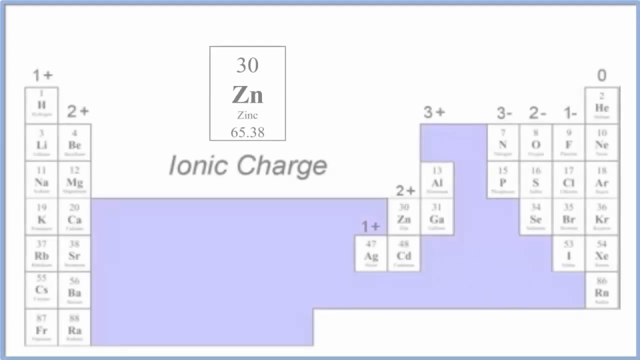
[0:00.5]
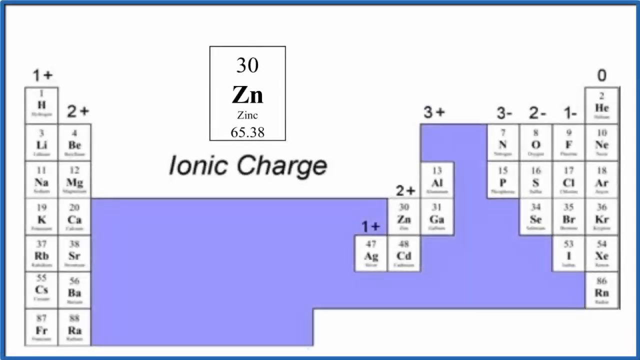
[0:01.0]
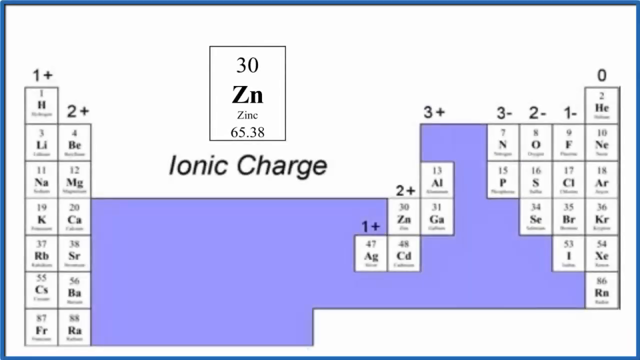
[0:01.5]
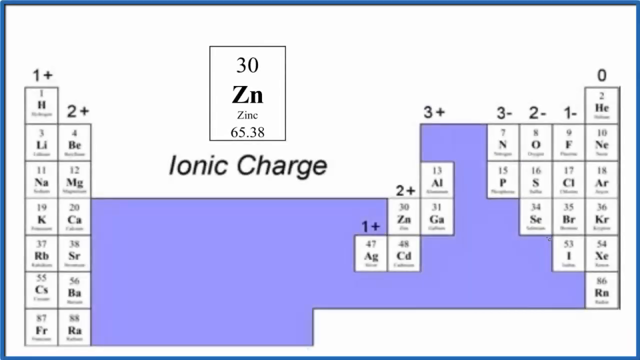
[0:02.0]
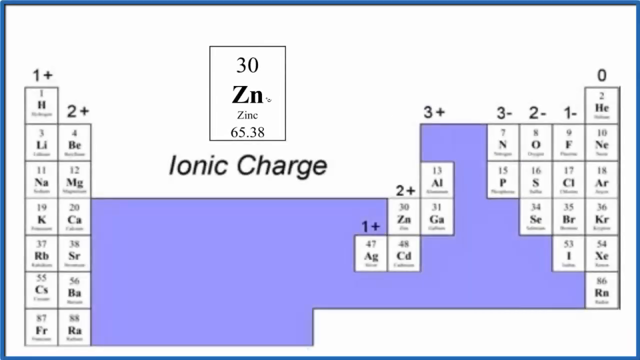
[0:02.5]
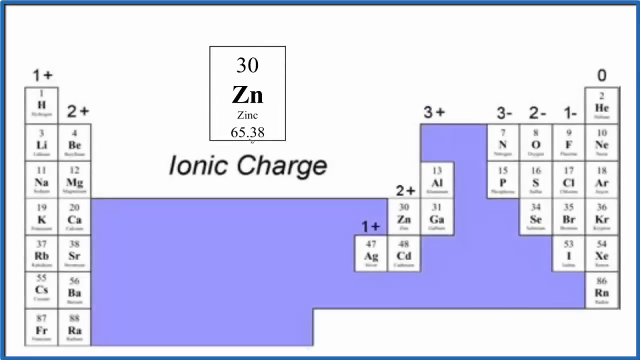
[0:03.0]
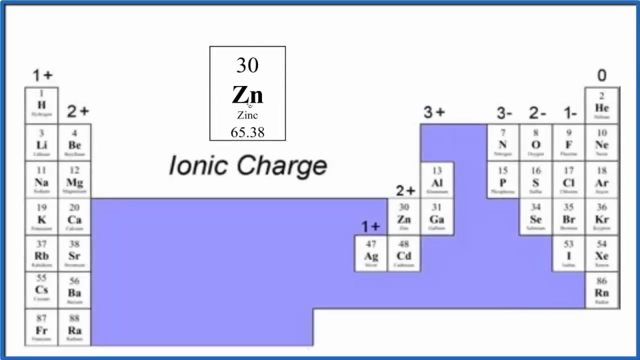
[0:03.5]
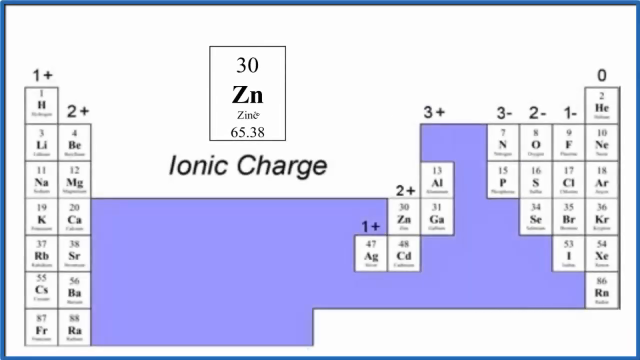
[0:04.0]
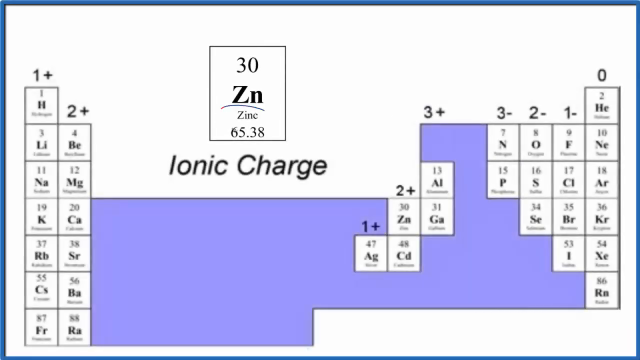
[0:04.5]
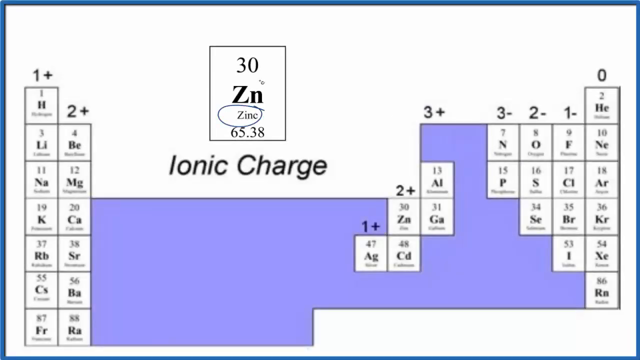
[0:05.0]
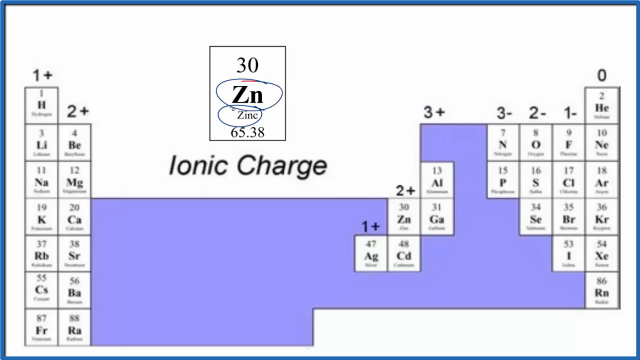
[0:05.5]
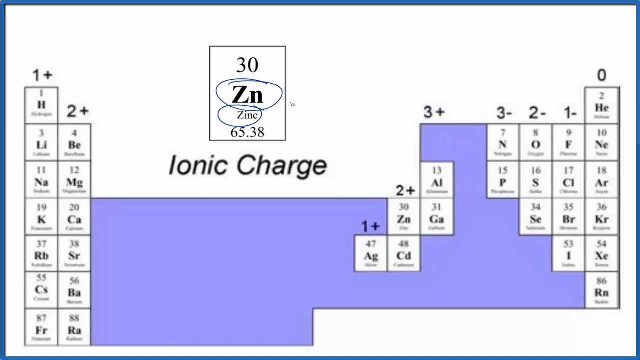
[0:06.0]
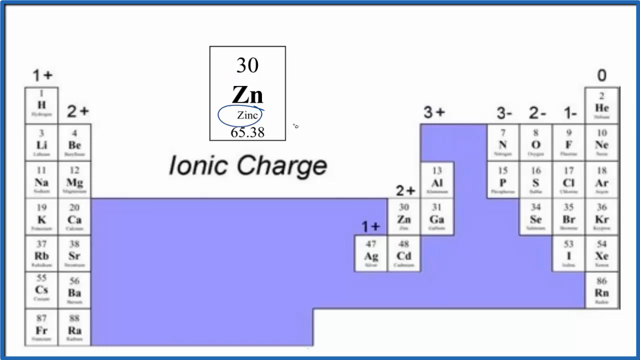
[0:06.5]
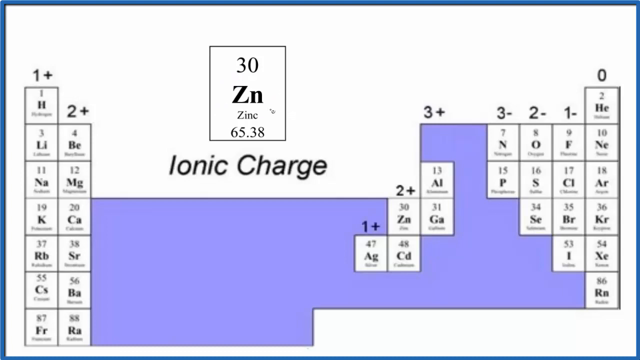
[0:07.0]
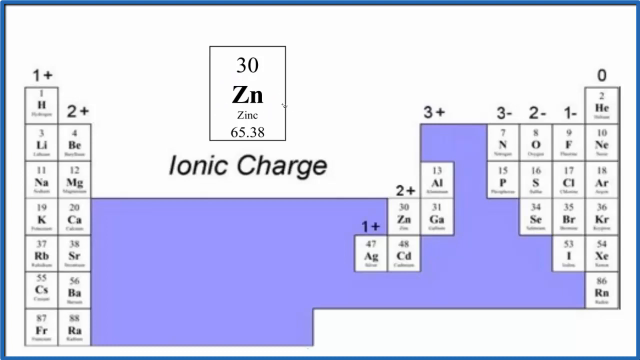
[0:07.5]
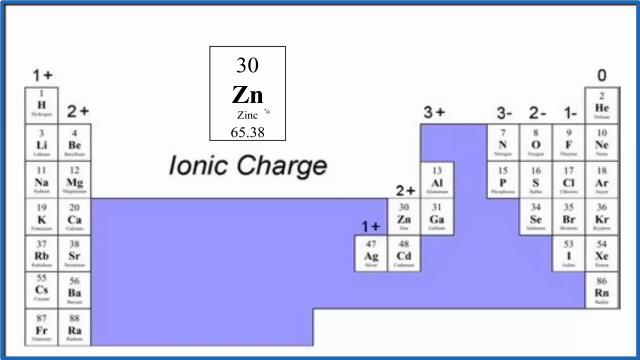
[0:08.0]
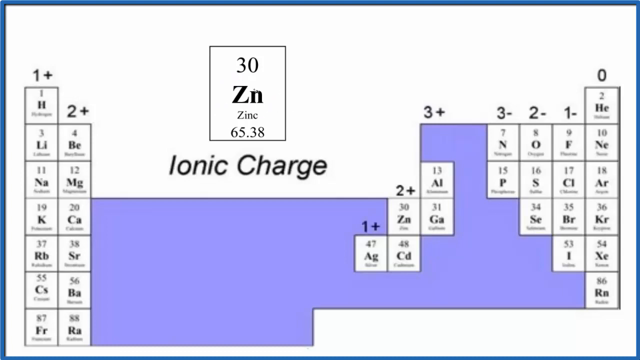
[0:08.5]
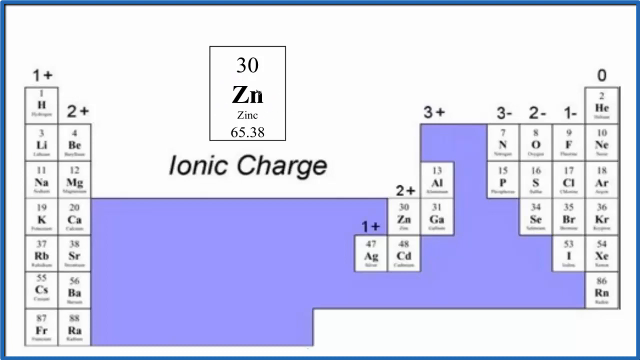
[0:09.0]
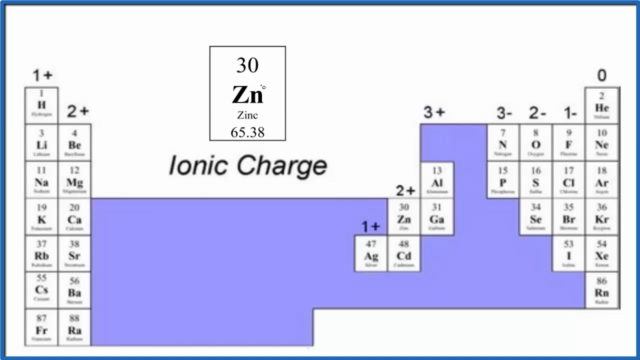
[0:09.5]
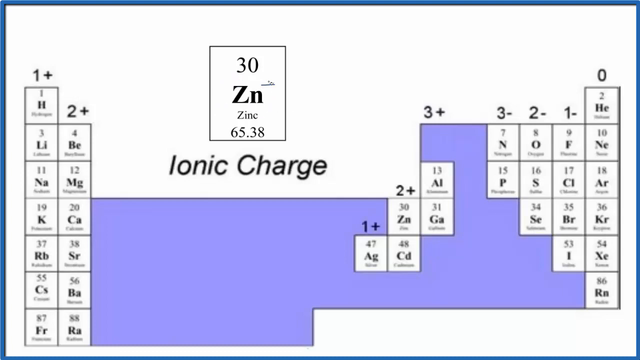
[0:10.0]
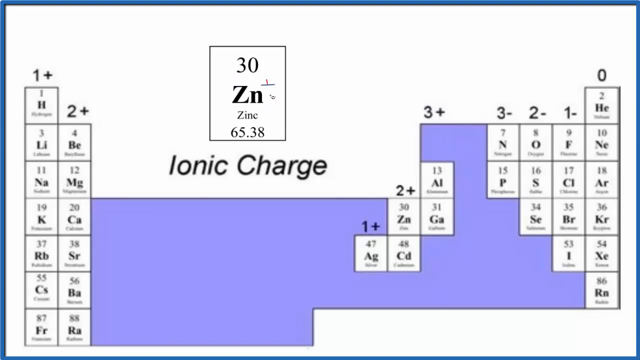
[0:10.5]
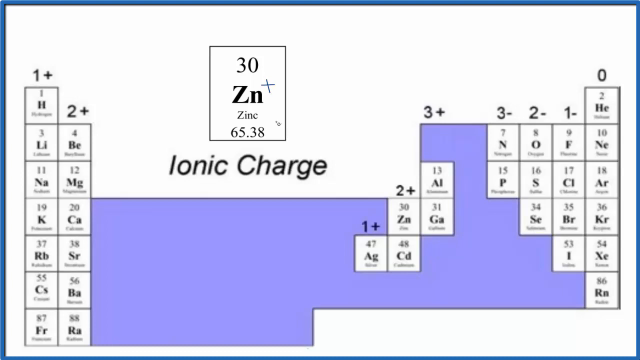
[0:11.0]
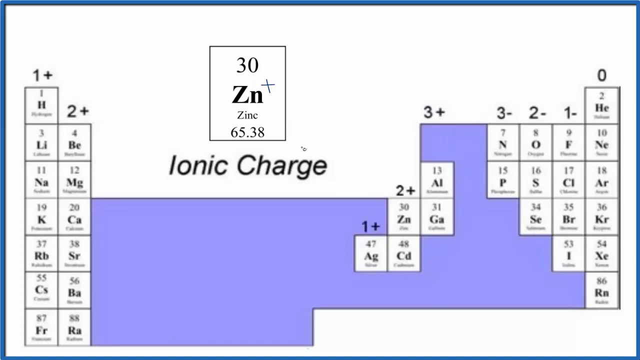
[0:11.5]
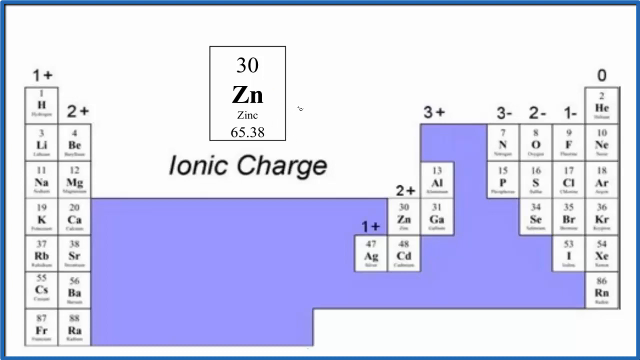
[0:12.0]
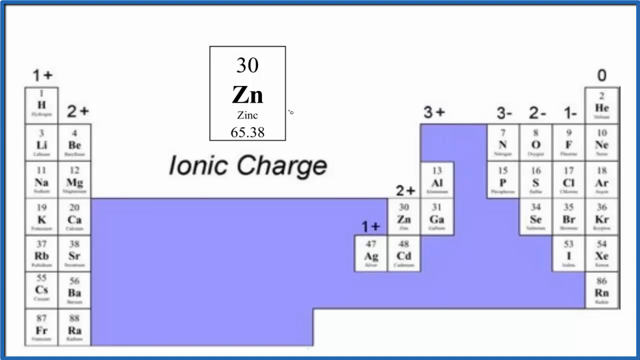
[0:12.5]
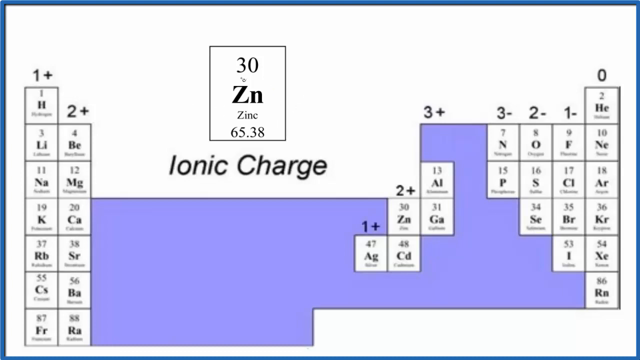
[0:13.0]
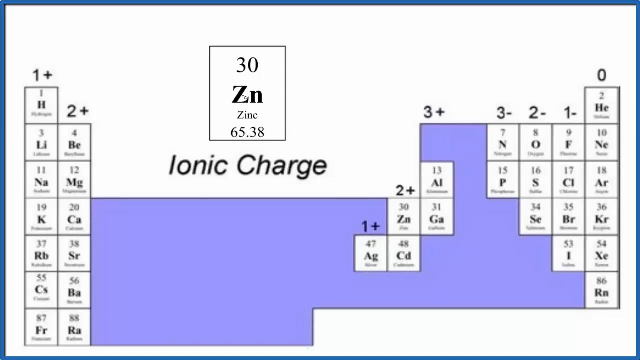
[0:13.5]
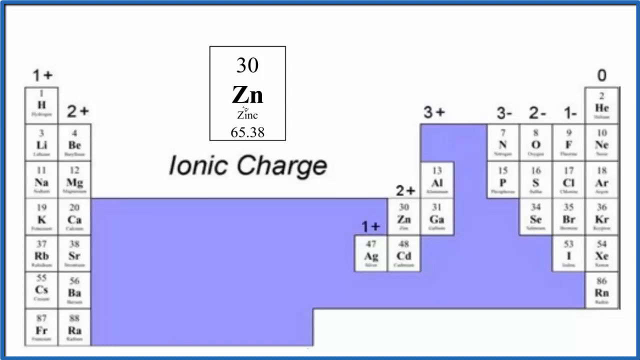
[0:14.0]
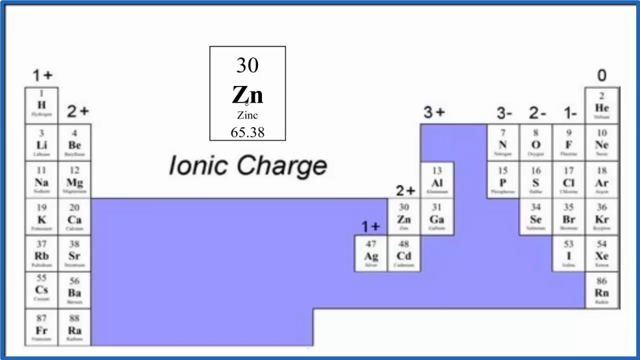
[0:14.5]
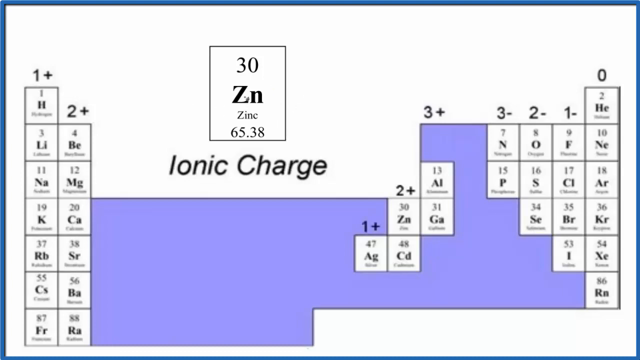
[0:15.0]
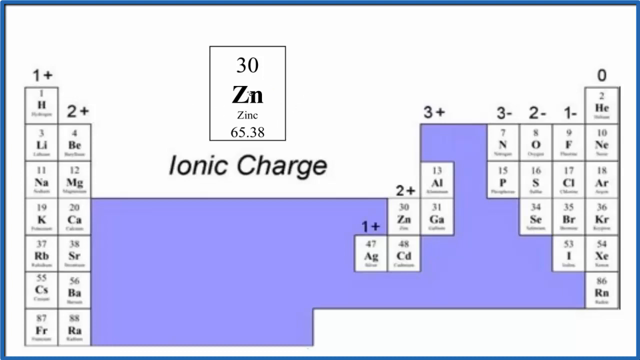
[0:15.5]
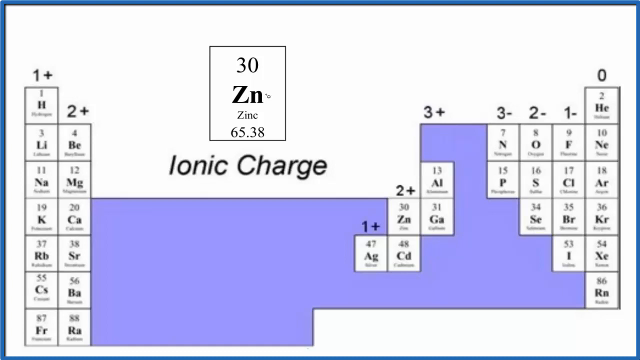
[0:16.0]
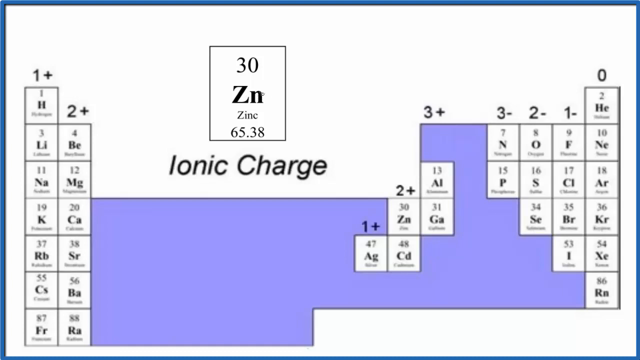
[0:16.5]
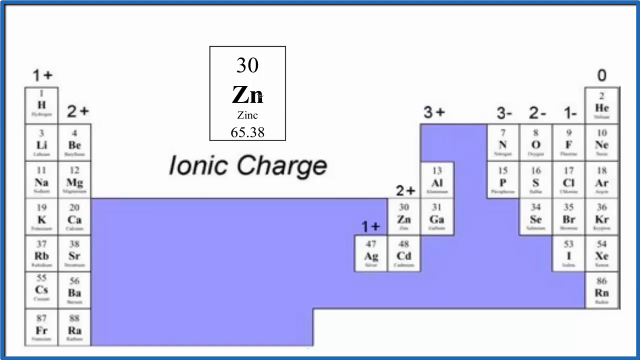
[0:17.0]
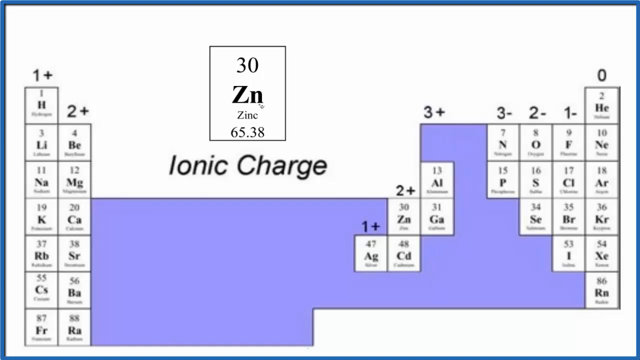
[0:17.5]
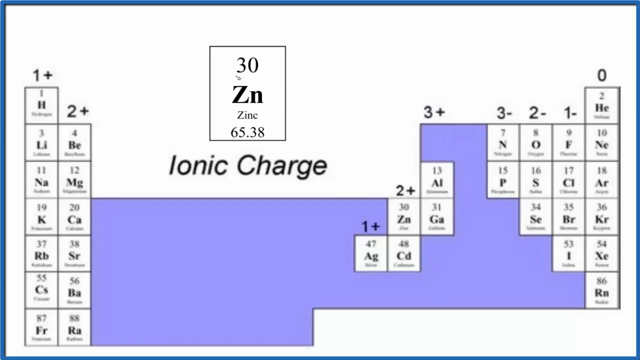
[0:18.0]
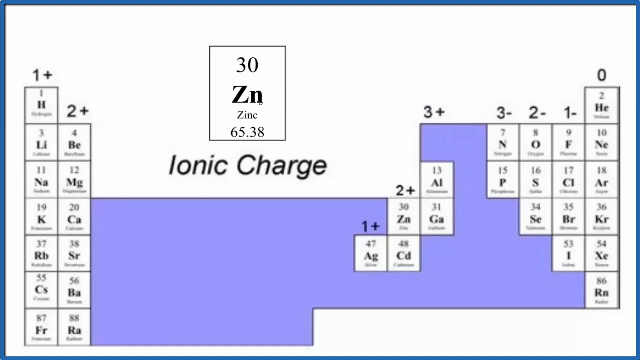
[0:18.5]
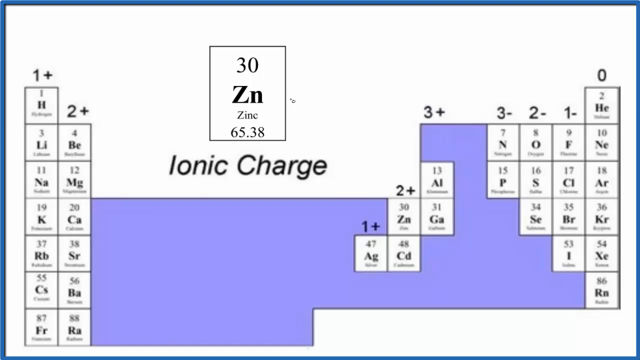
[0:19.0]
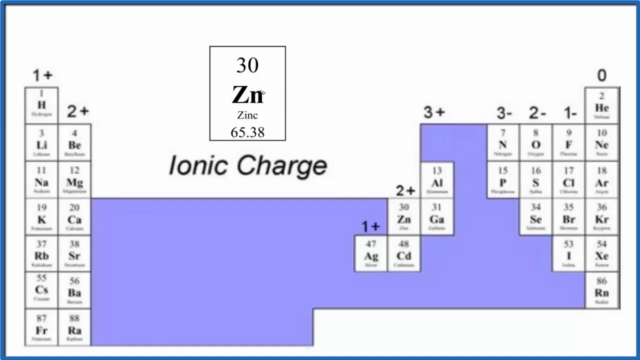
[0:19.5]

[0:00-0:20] A chart is visible from the start of the video. In the center, toward the left side, black writing reads "ionic charge". Above it is a vertical rectangular box containing "30ZN Zinc 65.38". On the left of the screen are more rectangles: seven going vertically down the left-hand side, with six rectangles next to them. A blue section of the screen is attached to the boxes on the left-hand side and to more boxes on the right-hand side. Five further rectangles make up the shape of a corner that steps down three times. Then there is another section of blue, followed by more boxes running vertically on the right-hand side of the screen.